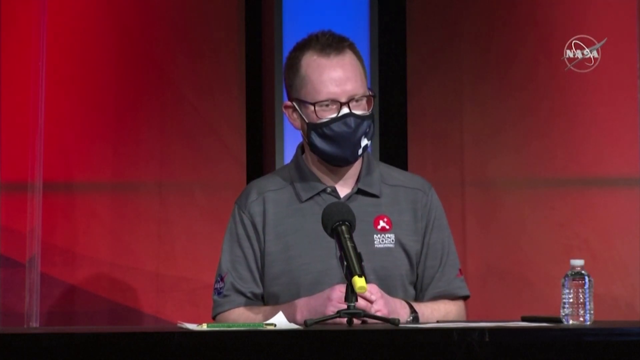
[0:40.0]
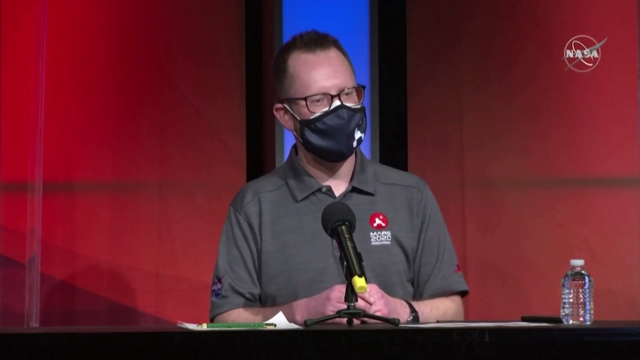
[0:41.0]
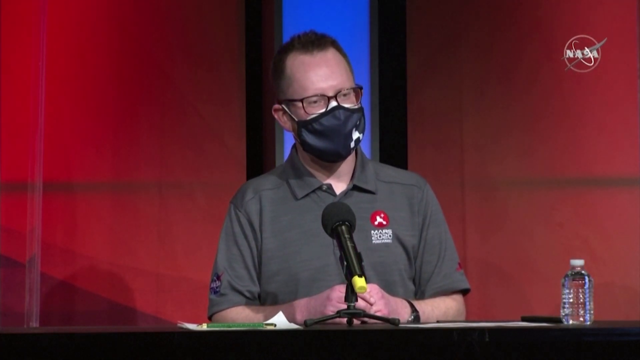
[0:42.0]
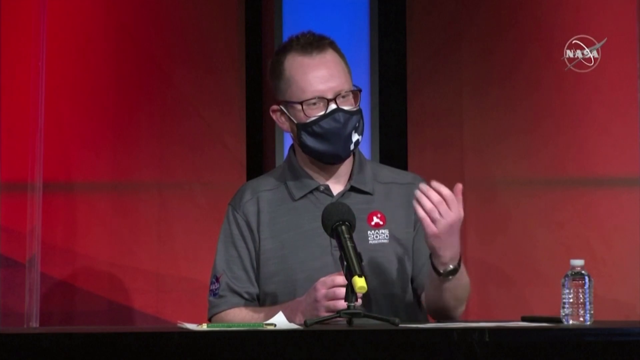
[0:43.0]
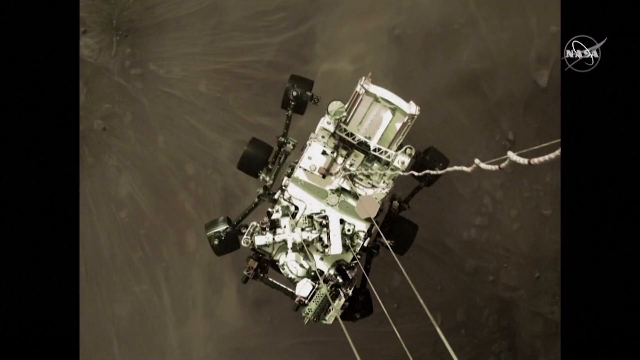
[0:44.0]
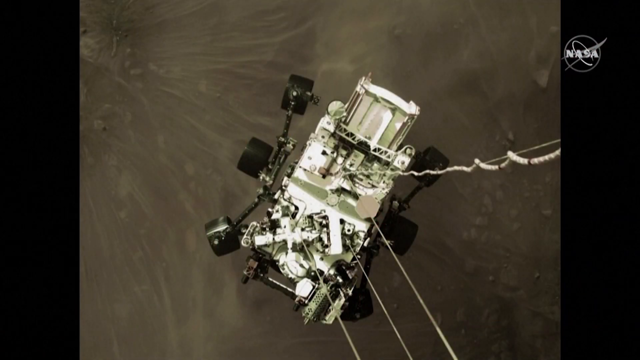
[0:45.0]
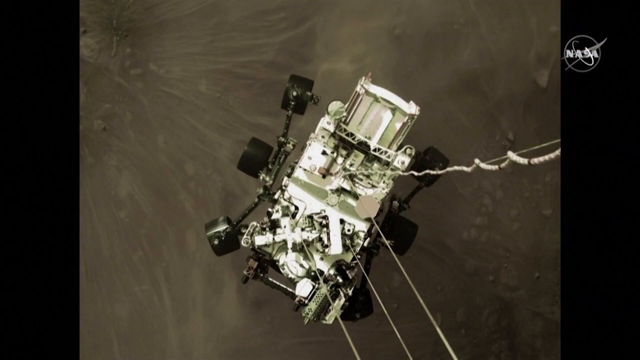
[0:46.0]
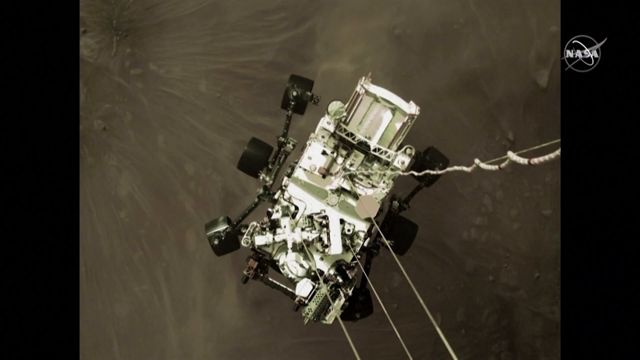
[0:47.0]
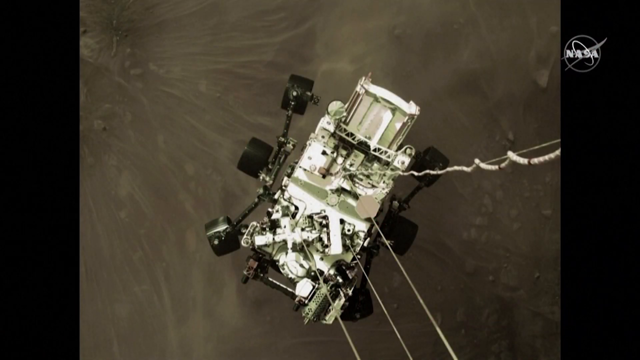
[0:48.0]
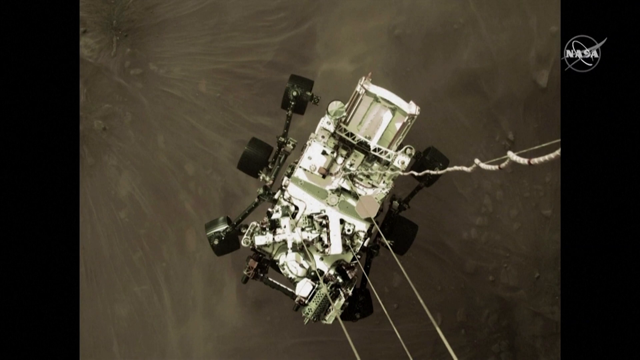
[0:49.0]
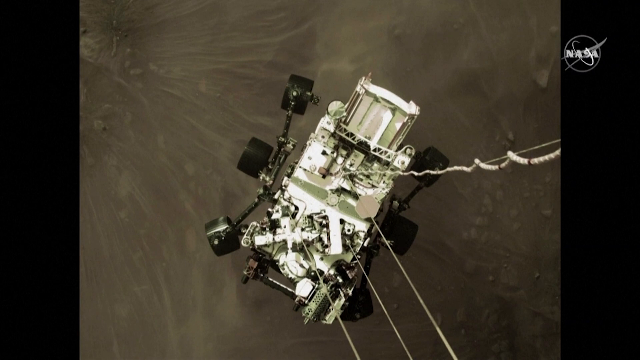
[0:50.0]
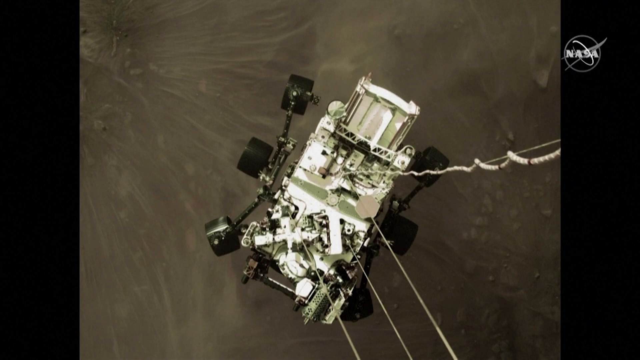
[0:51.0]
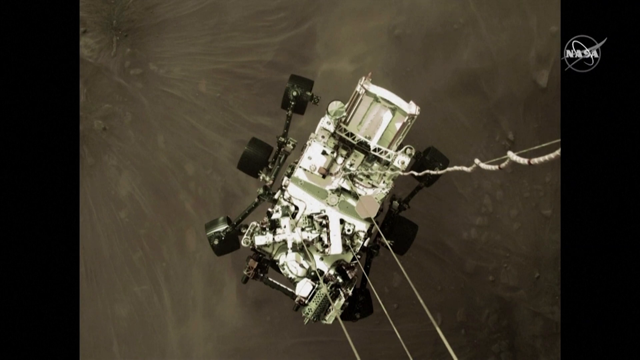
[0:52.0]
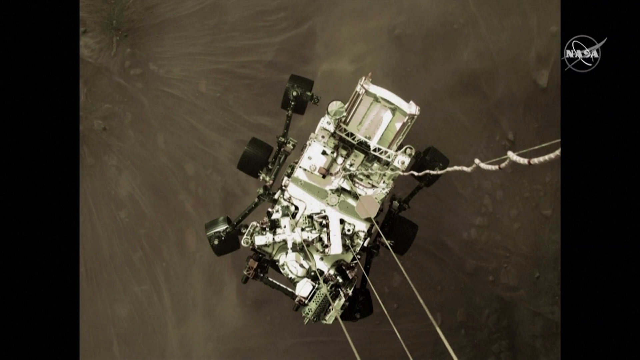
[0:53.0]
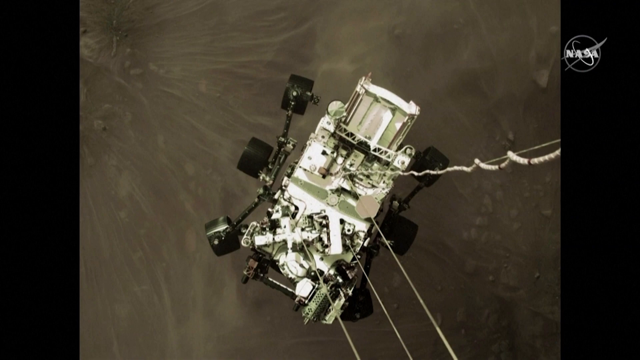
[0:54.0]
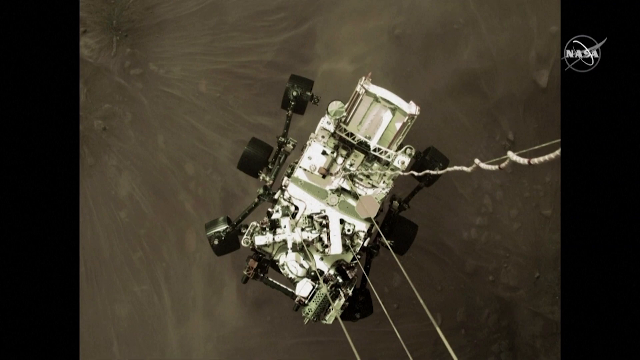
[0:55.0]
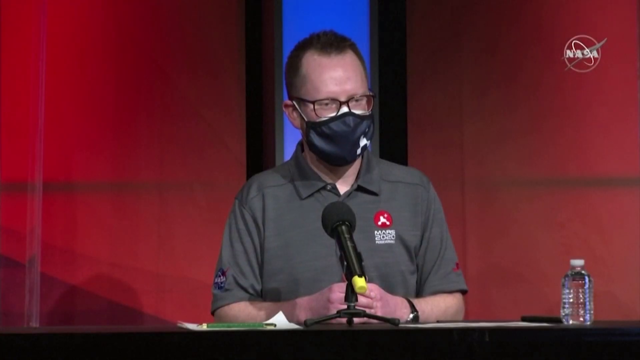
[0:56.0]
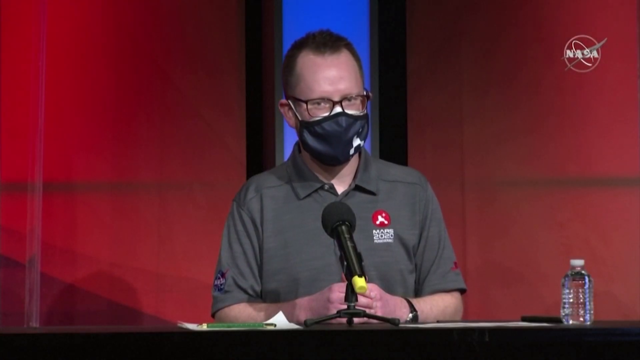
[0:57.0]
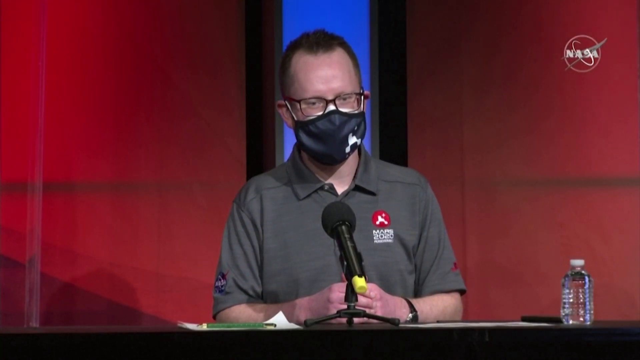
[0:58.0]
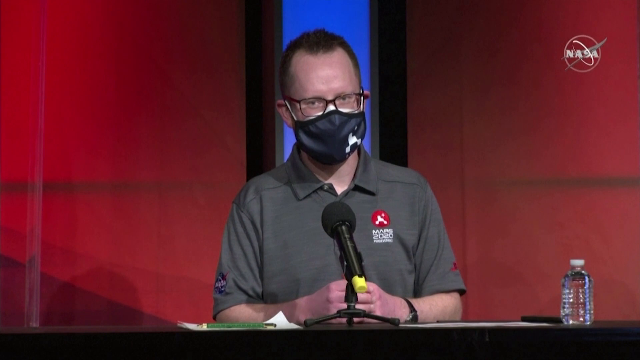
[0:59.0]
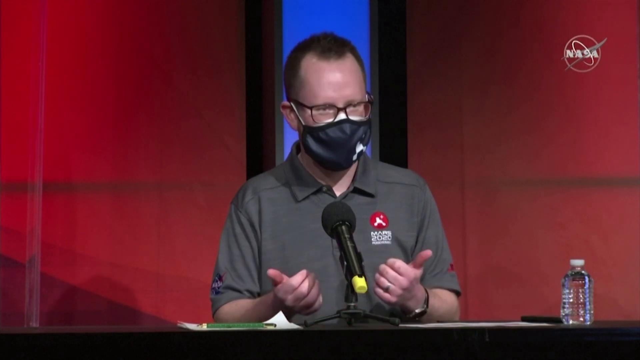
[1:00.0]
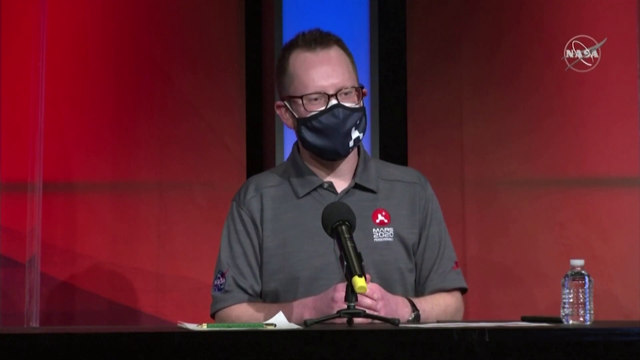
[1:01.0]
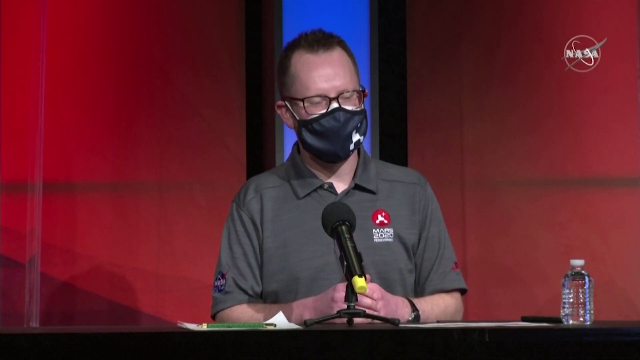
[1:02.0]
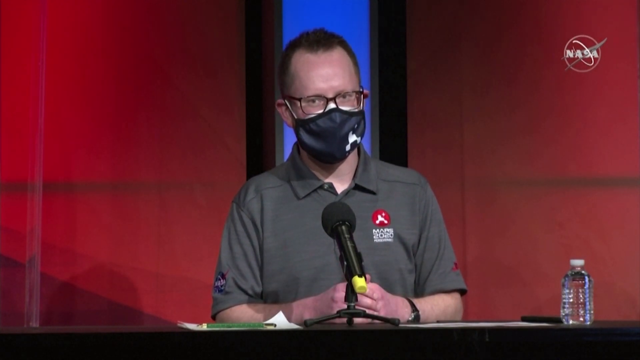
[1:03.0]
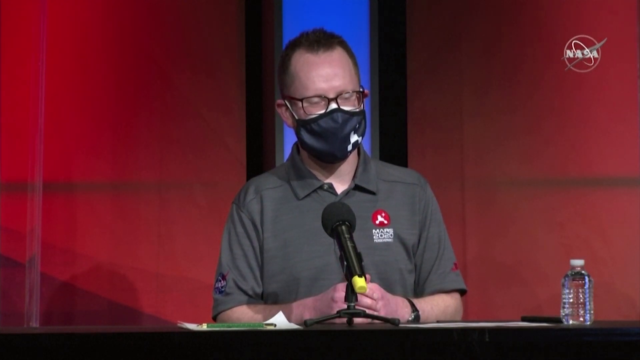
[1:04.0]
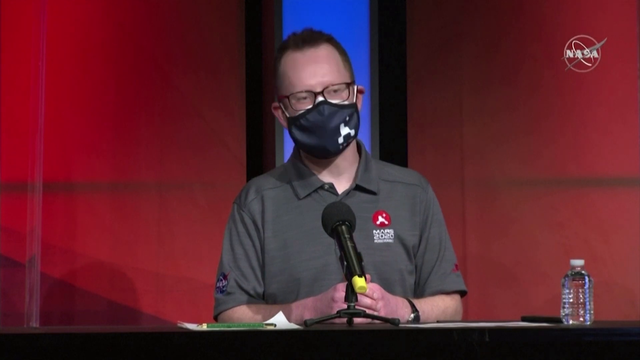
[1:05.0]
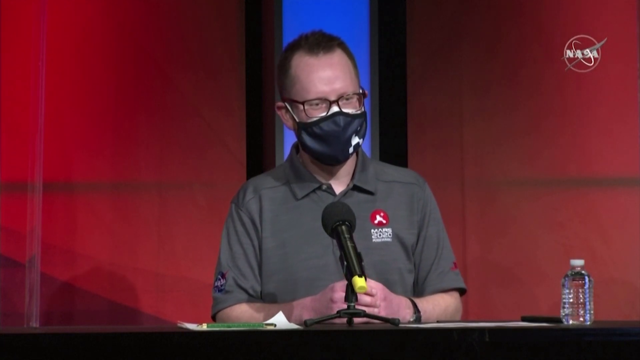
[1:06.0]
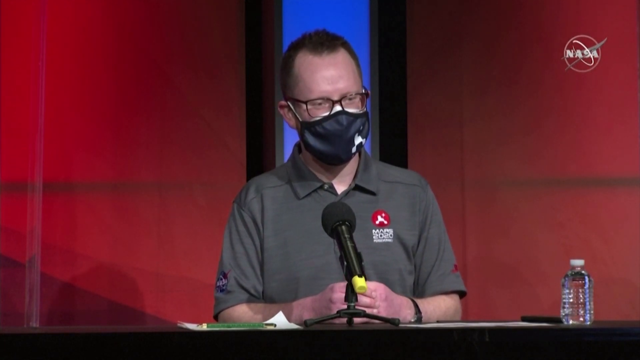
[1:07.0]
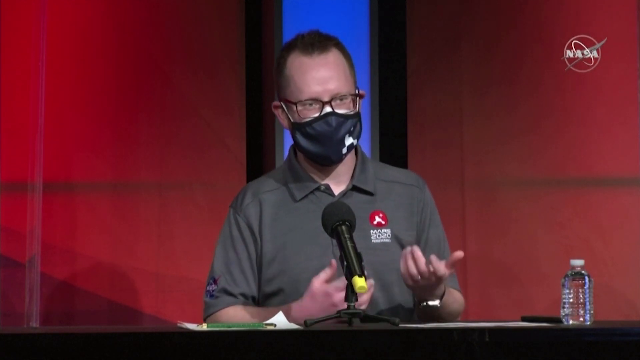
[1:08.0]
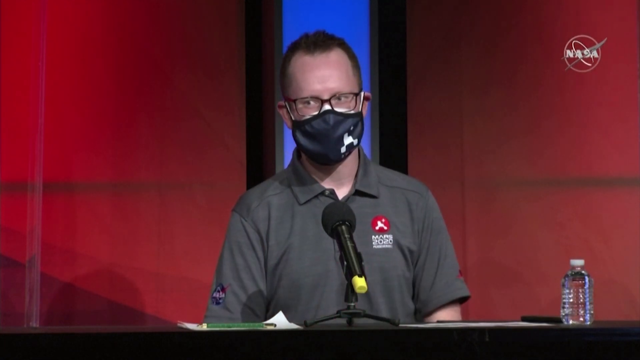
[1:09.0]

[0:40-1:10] The man answering or asking questions in the NASA press conference room is shown, with a water bottle on the right side of the screen on a desk or table. He wears a mask, glasses and a greenish gray shirt with a red logo and something in white writing that is hard to see, and he has short hair. A little bit of blue, like a window or something, is right behind him, and he makes hand gestures. A still shot of the rover appears with the surface of the planet, and the lines are strings from the parachute. The view returns to the man. His microphone is black with a little yellow at the bottom, and his mask is black with a white emblem. The walls are red, and the lighting is kind of reddish.